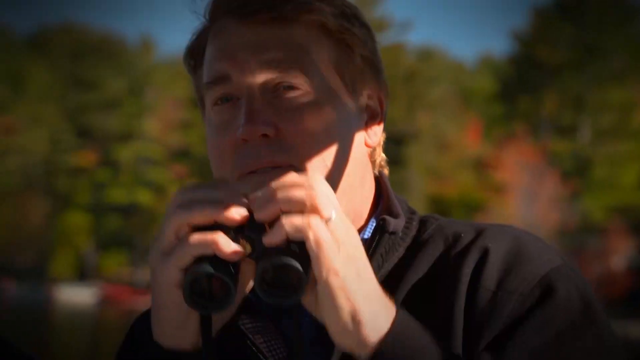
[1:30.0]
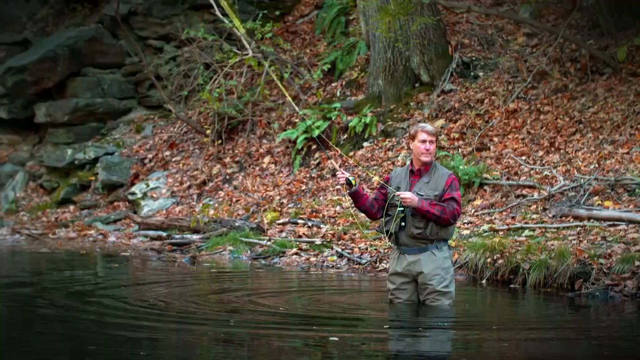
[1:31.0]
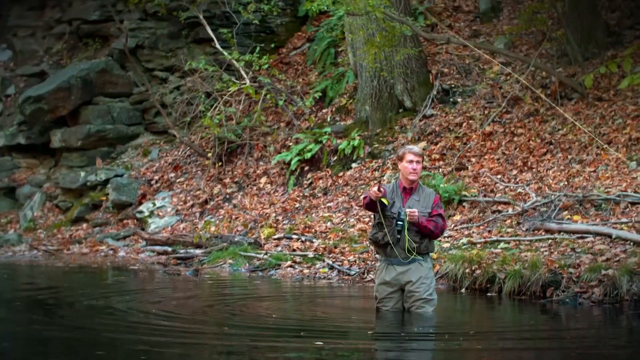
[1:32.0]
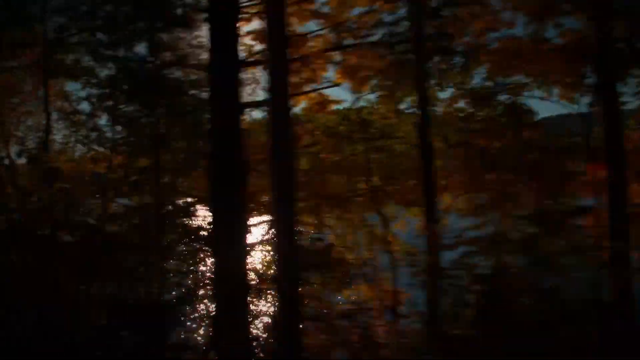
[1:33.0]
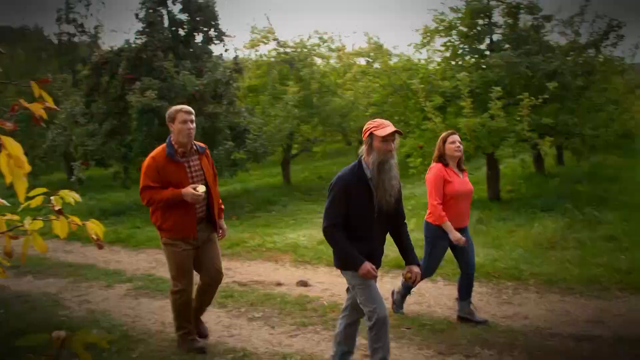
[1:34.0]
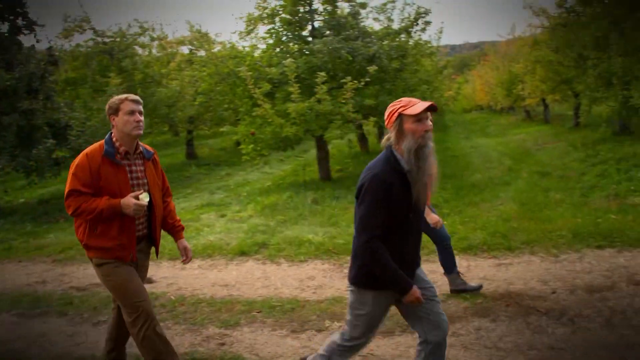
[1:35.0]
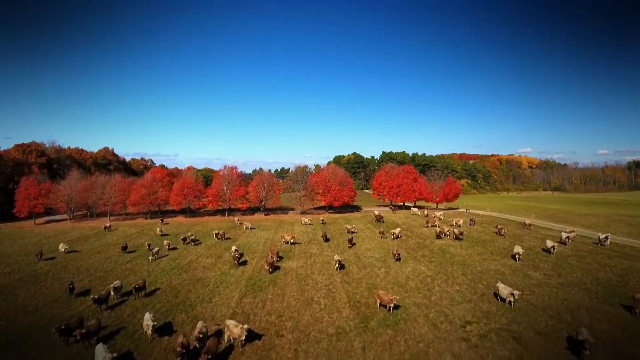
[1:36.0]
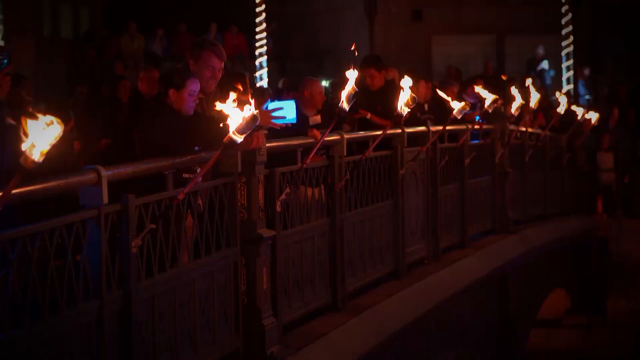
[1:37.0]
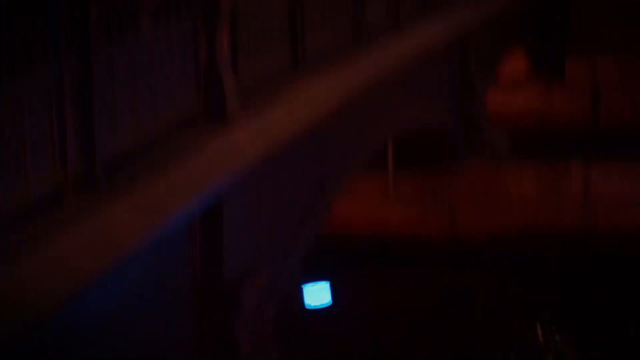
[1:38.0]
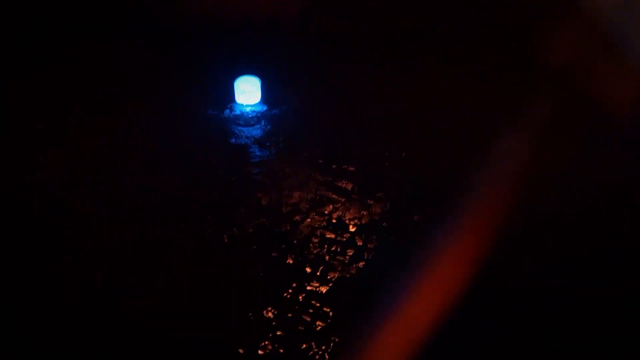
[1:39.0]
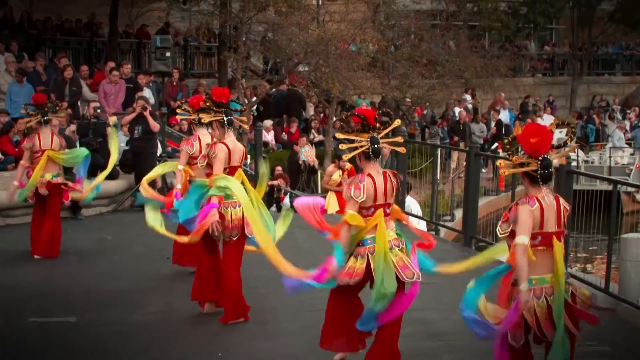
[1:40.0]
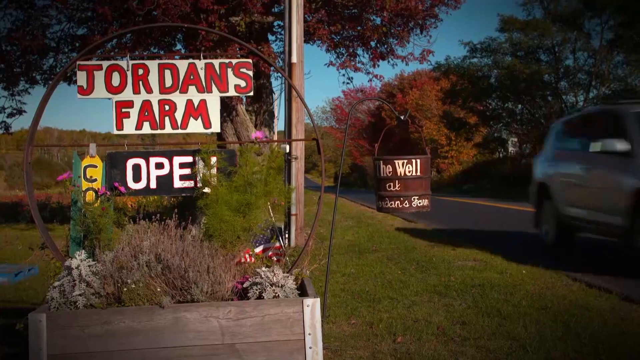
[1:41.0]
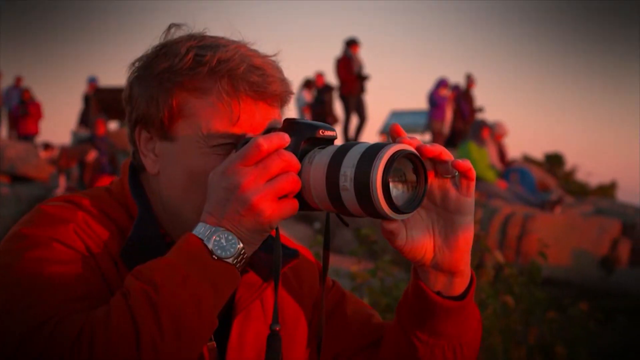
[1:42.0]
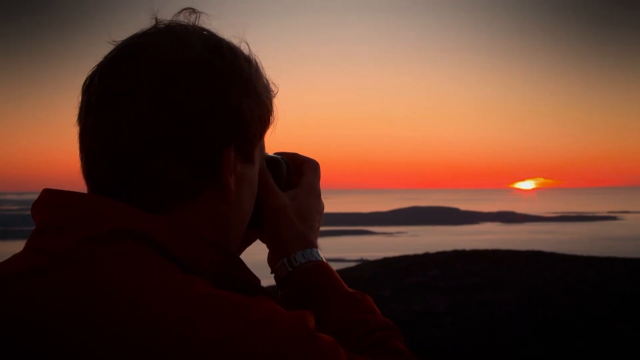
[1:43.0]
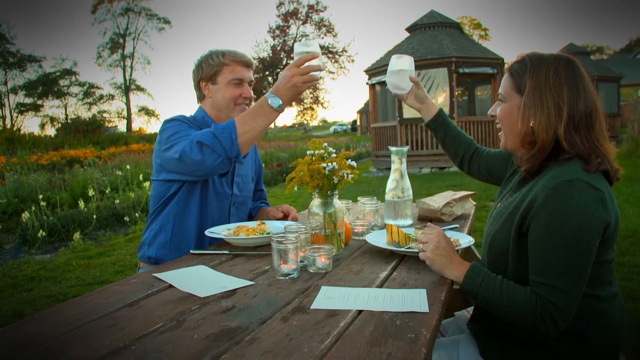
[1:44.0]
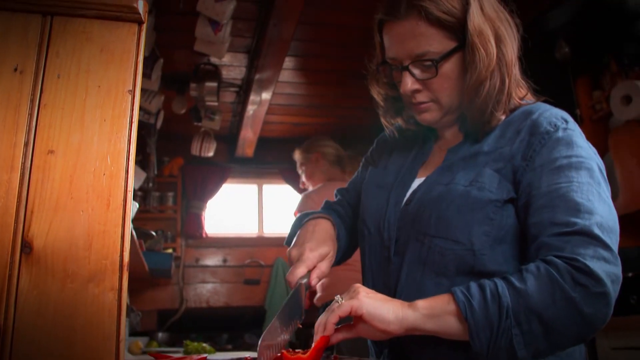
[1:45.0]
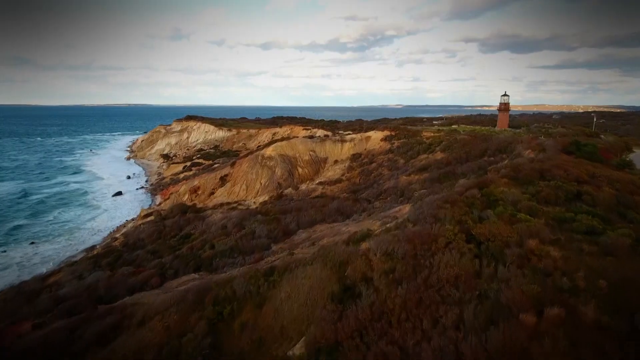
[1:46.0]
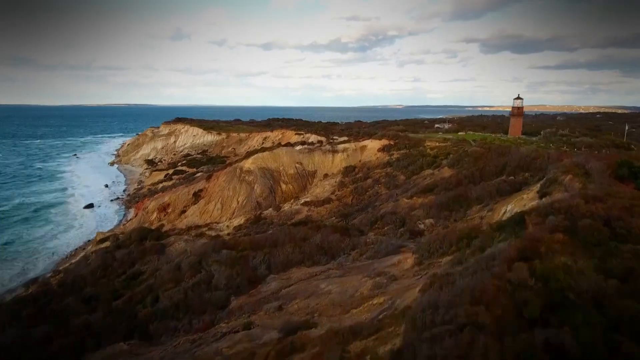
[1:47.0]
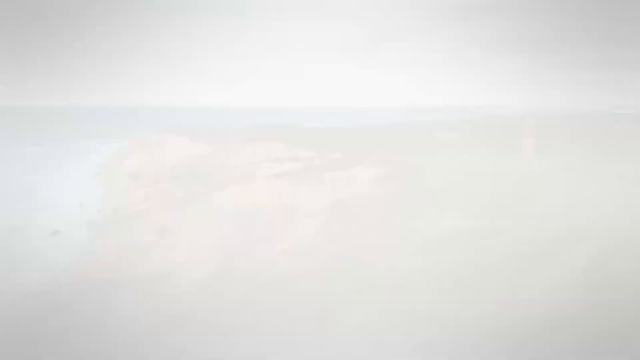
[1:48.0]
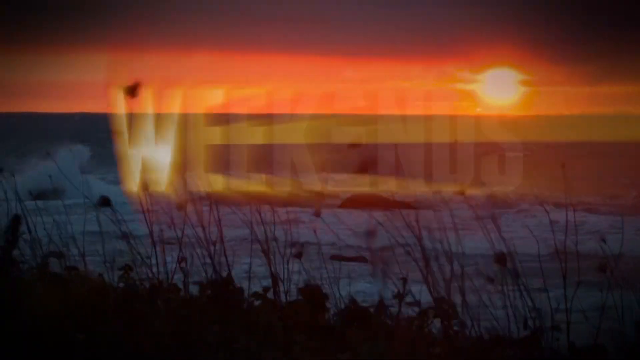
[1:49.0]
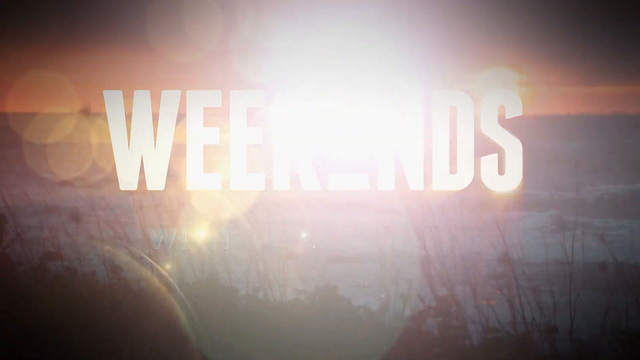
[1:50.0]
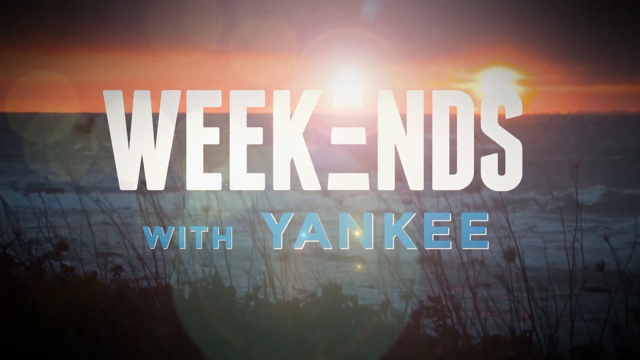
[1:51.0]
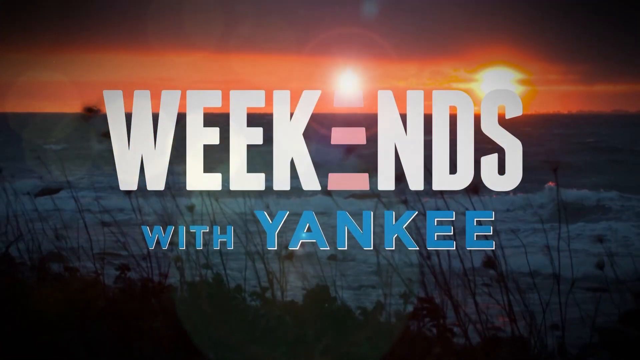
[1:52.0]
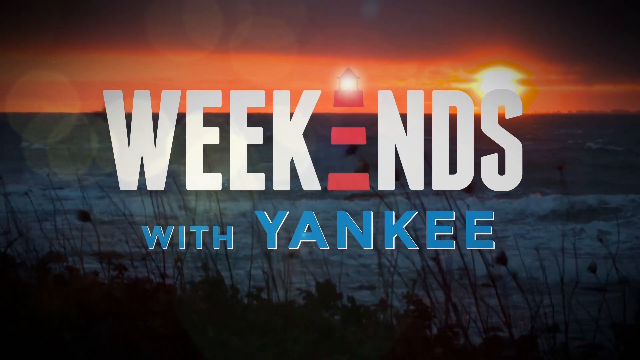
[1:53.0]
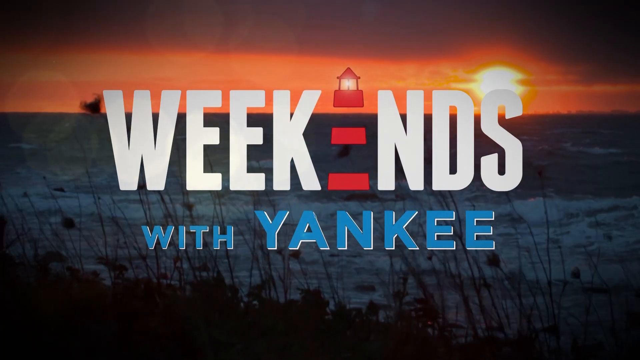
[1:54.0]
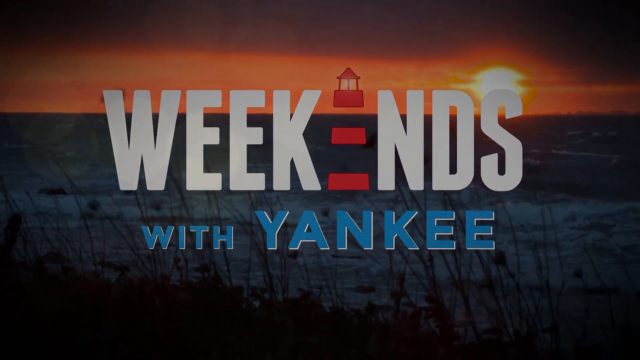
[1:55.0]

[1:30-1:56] A man with short hair and a dark jacket clutches a pair of binoculars with both hands, holding them in front of his chest and then lifting them to his eyes. A fisherman with blonde hair stands in the river, wearing pale green trousers, a sleeveless jacket and a checked red shirt, and casts his line into the river. Behind him are leaves on the ground and tree trunks, with rocks on the left of the screen. Sunlight shines through the trees as the view moves quickly past them. Three people walk together, two men and a woman. The woman has dark hair and an orange top. The man in the orange jacket eats an apple, and the second man has a long grey beard and an orange cap.